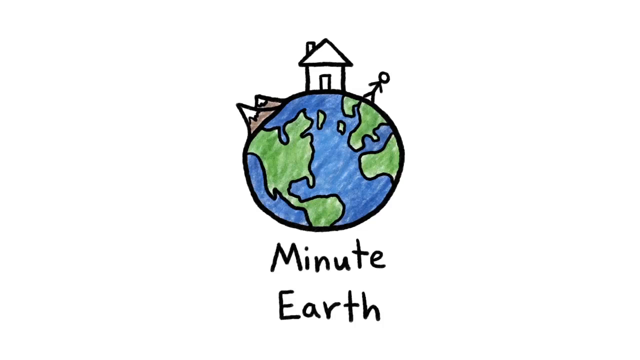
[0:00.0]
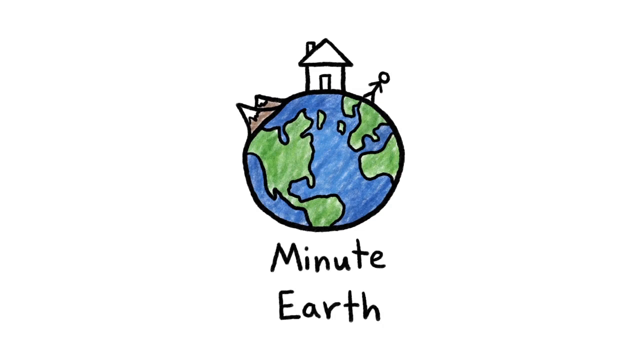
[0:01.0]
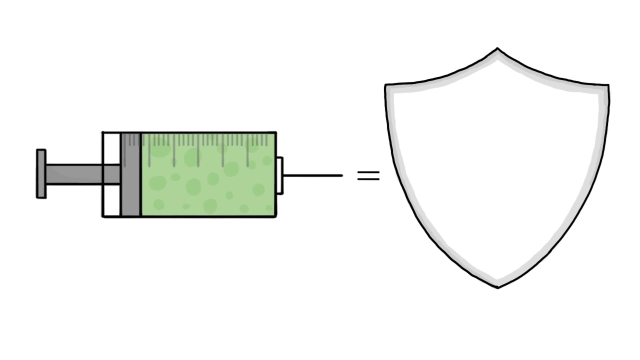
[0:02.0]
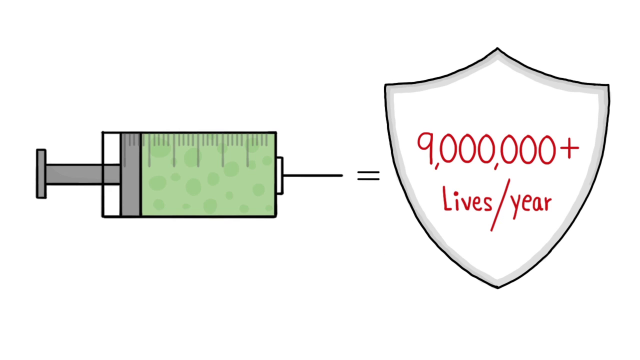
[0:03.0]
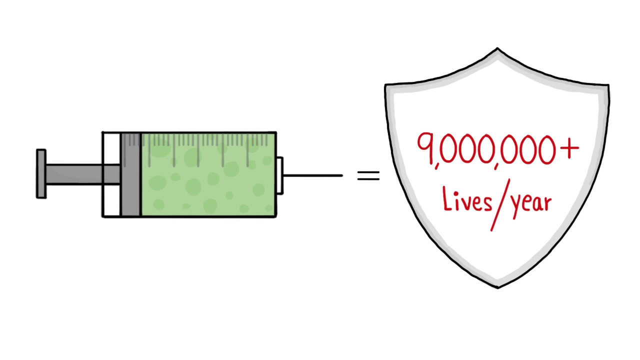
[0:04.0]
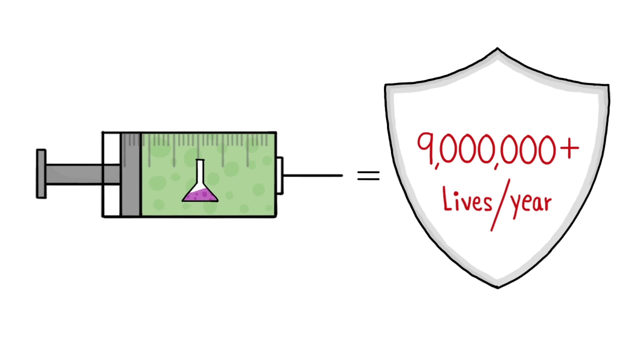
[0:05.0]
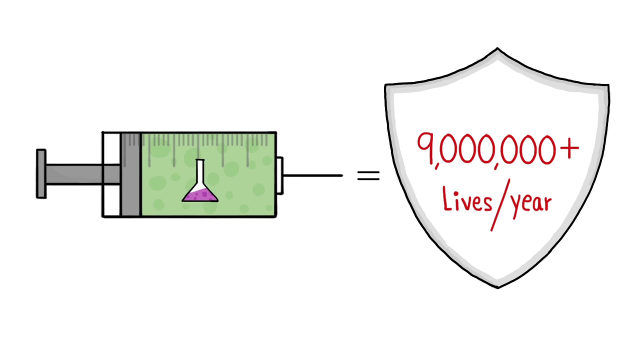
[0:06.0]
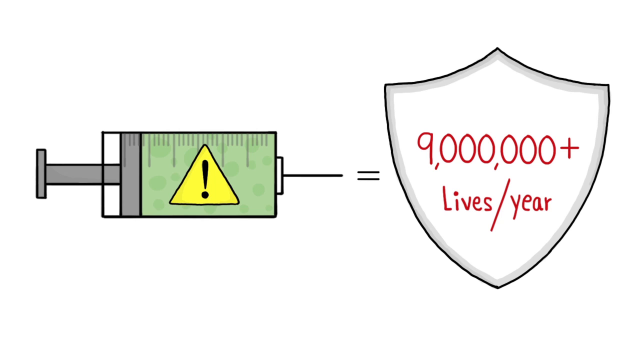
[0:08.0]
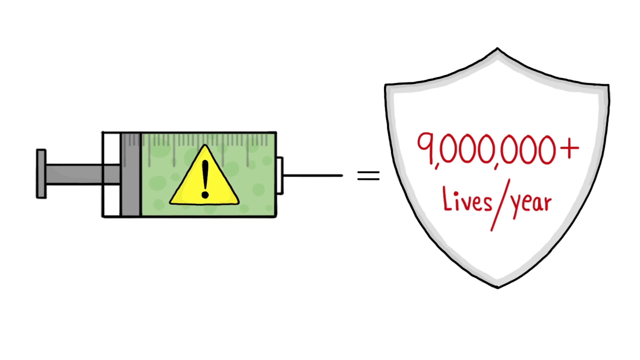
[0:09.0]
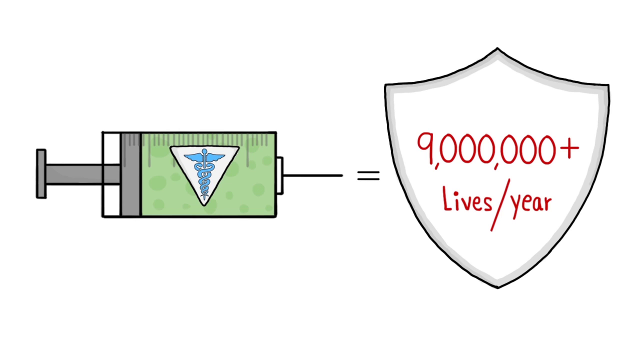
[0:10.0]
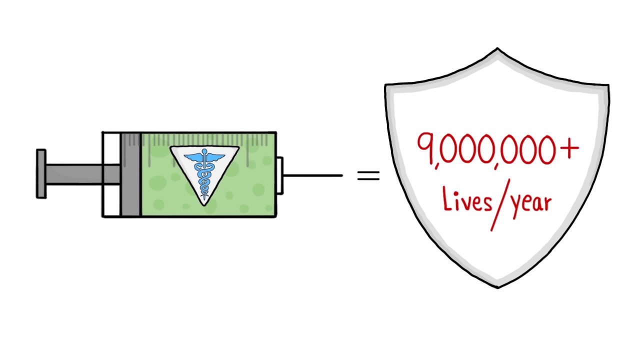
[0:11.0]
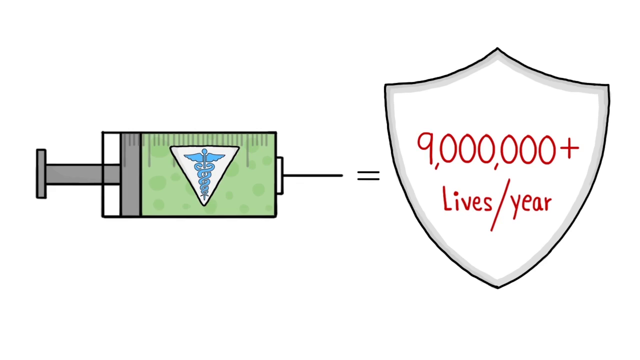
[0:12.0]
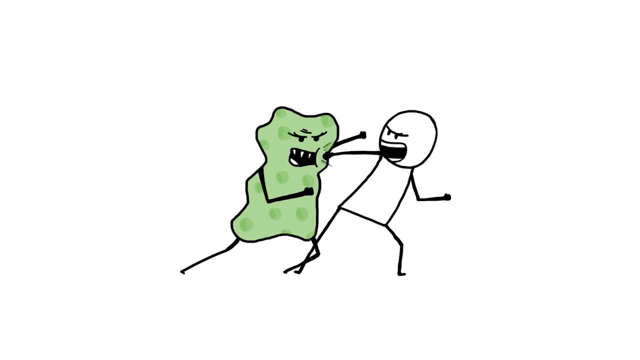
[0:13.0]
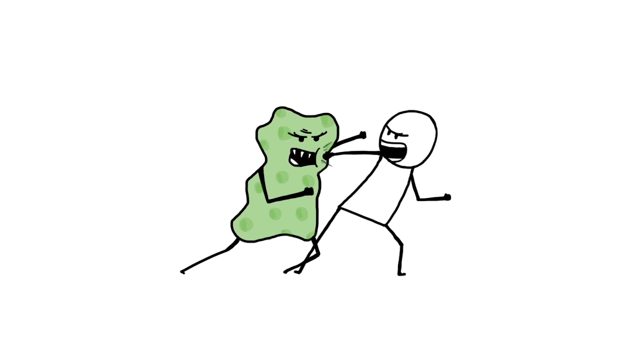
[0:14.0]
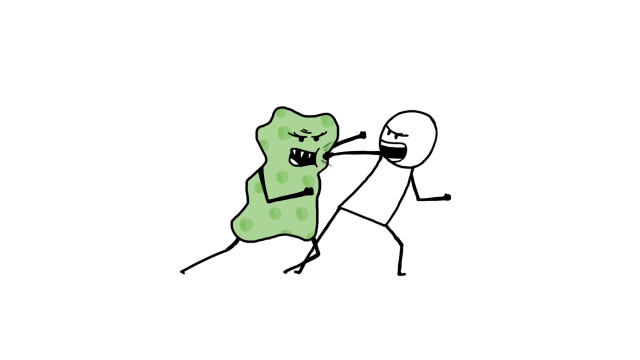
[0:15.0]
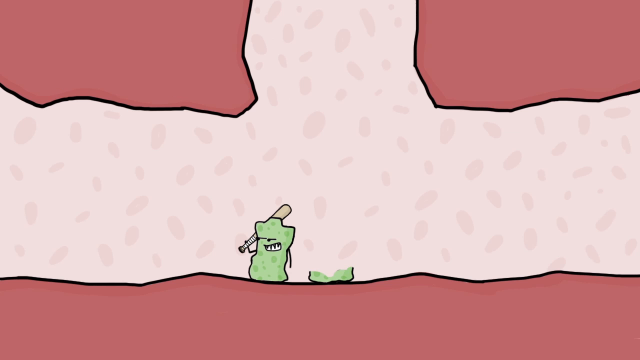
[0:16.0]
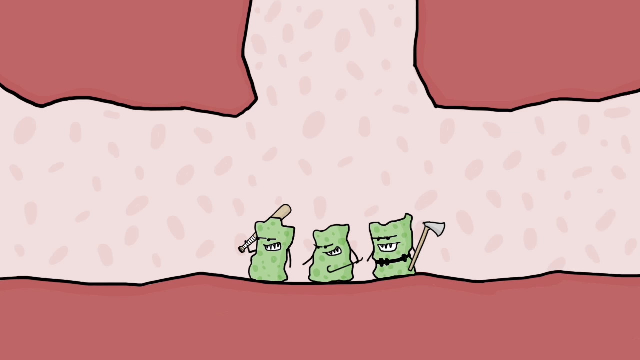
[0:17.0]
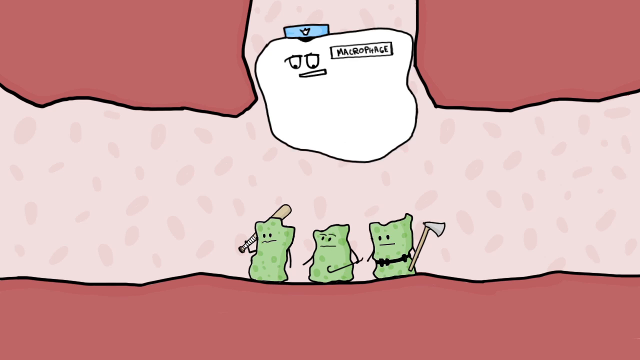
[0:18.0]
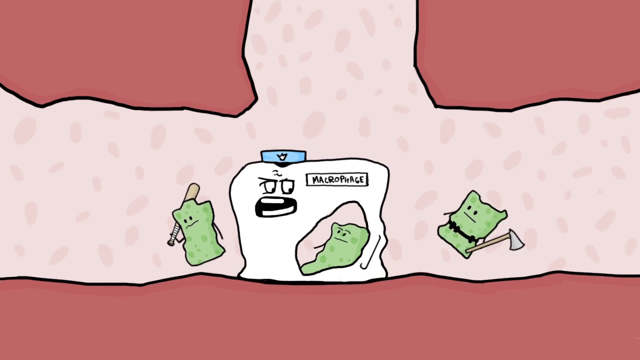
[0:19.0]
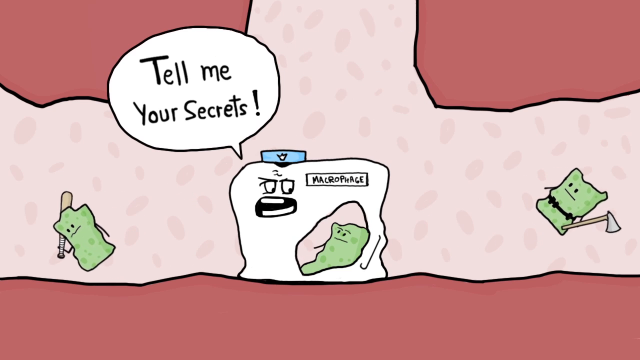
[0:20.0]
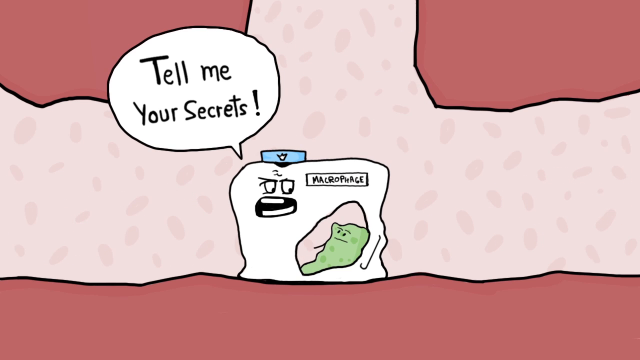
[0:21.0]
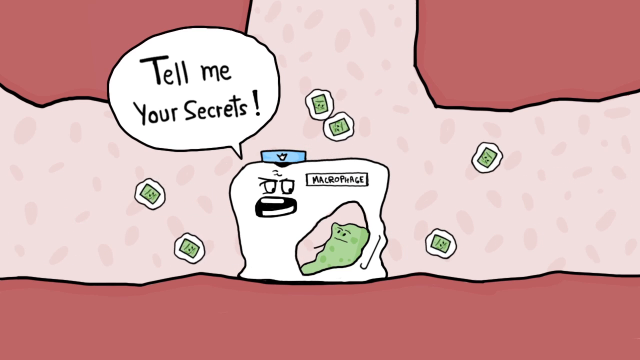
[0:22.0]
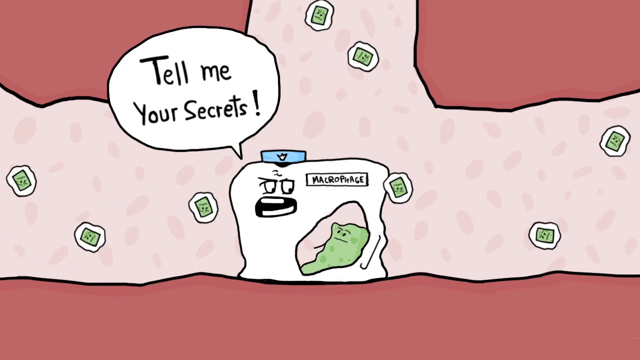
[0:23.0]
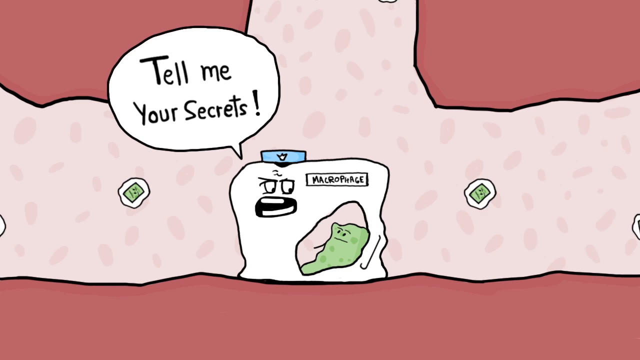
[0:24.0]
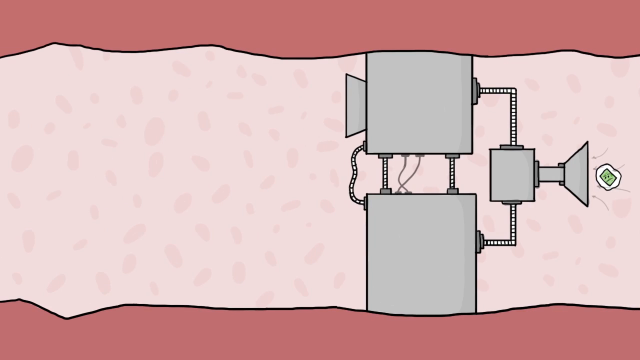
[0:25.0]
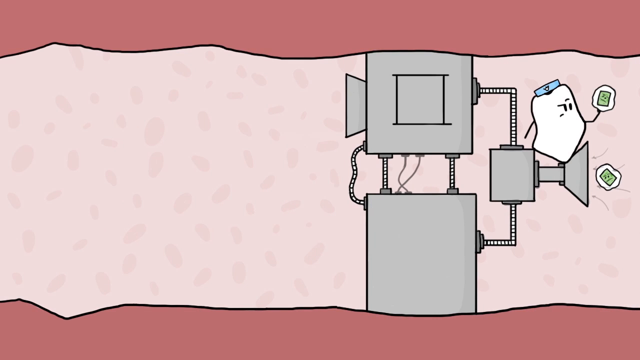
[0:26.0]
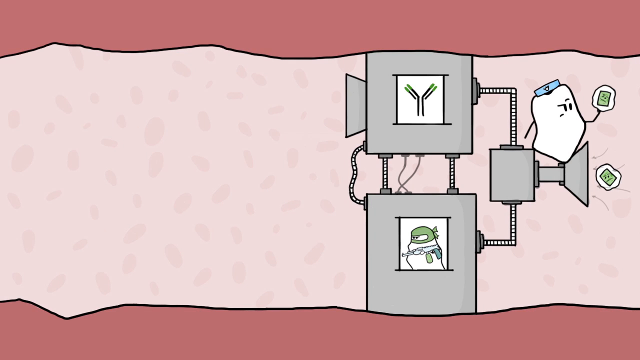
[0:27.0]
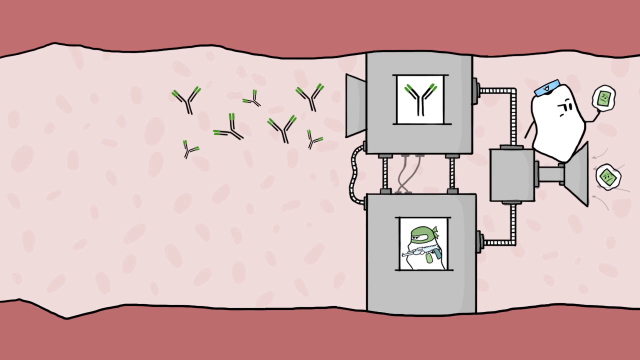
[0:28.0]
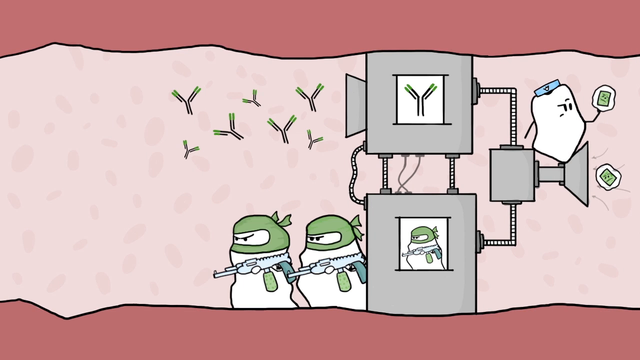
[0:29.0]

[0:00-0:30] The video opens with a drawing of Earth with "Minute Earth" written underneath. Mountains, a house and a little stick man are on the Earth. It is just a drawing, with blue water, green land, a white background and hand-written letters. The next screen shows a syringe with a needle on the end and a beaker in the middle of it holding pink fluid; there is also green liquid inside the syringe. Text reads "plus nine million plus lives per year" alongside a shield. The image changes to a yellow triangle with an exclamation mark inside the syringe, and then to a white triangle with what looks like a blue snake with wings; snakes are coiled around some sort of pole, or maybe a sword. A little green man that looks like a germ fights with another little stick man, and both seem really angry. Inside what may be a human, three little green germs are in something pink that looks like a tunnel; one holds an axe and one holds a baseball bat. A white square with a face captures one of the little green men, a speech bubble says "Tell me your secrets." and loads of little green circles fall out of the green man. There is some sort of machine with a little man on the inside and a little man on the outside, and three other angry-looking little men with guns.